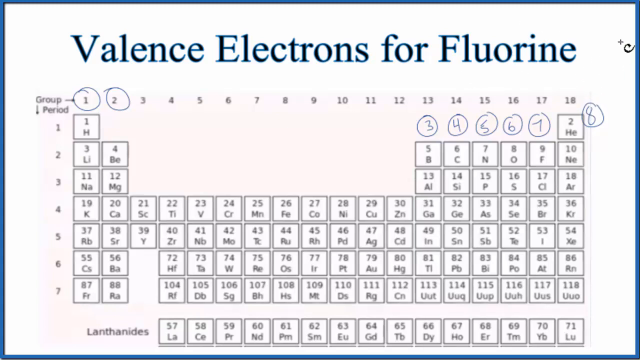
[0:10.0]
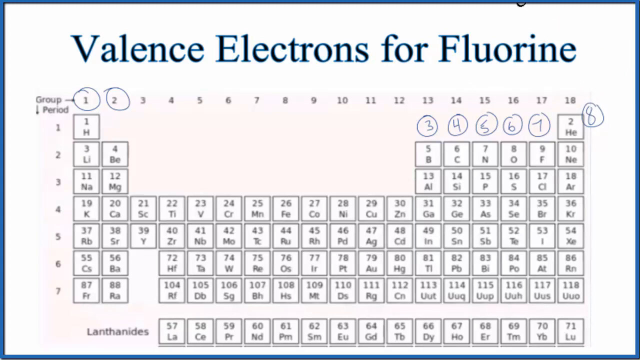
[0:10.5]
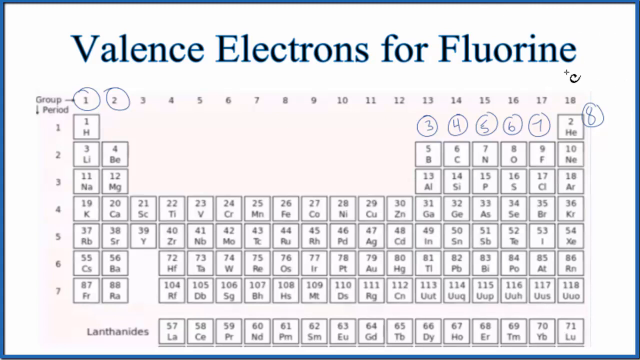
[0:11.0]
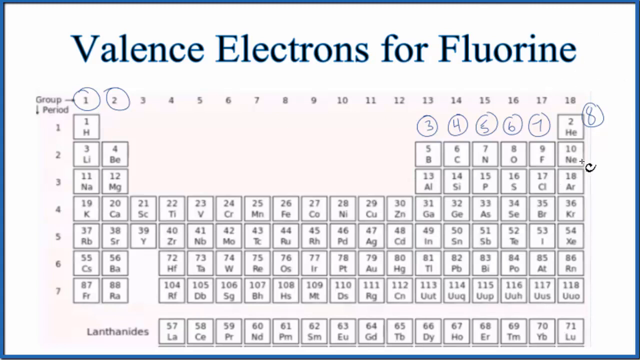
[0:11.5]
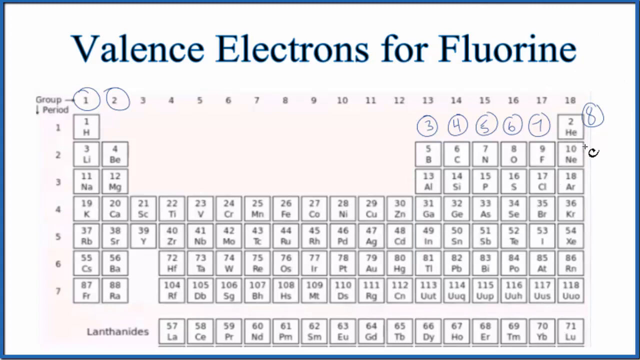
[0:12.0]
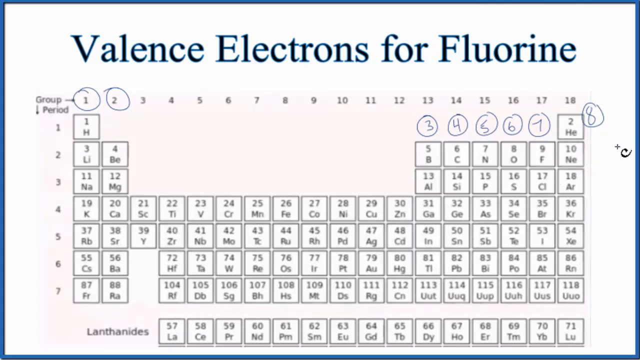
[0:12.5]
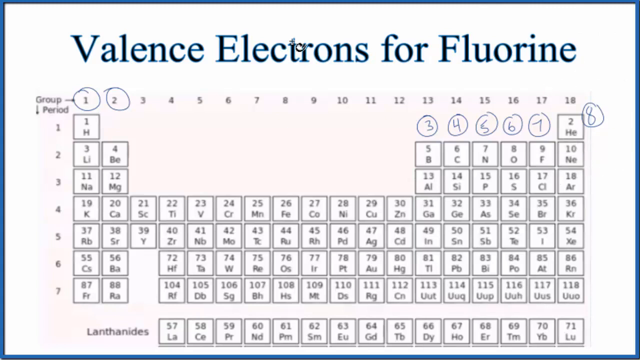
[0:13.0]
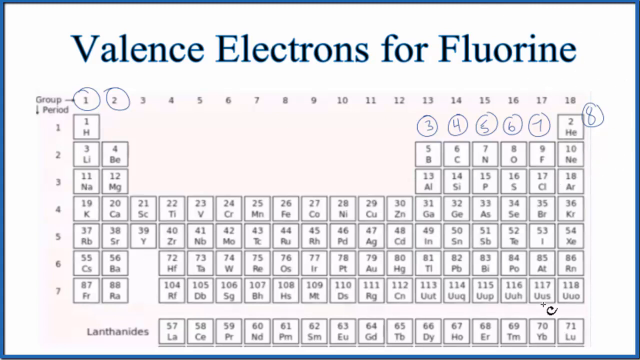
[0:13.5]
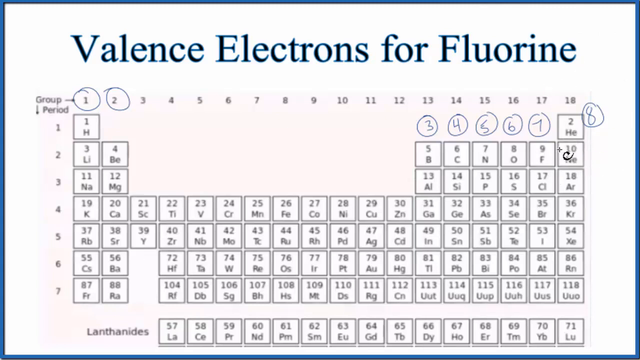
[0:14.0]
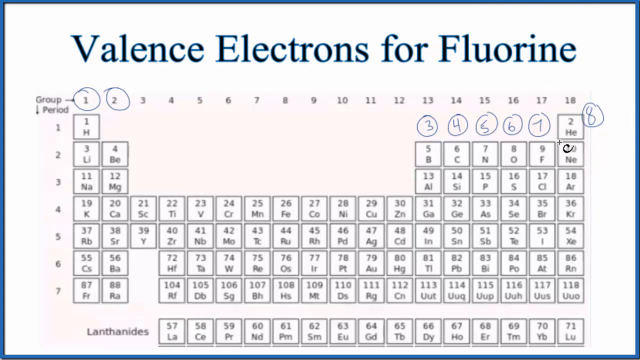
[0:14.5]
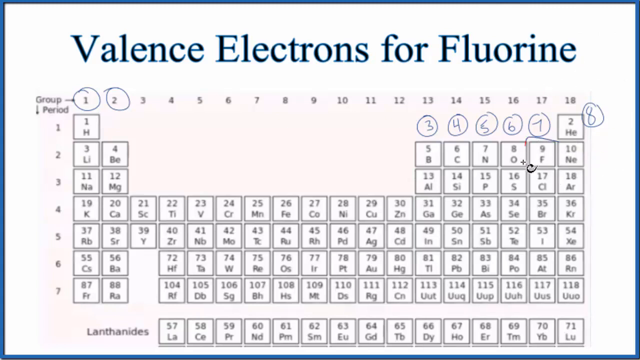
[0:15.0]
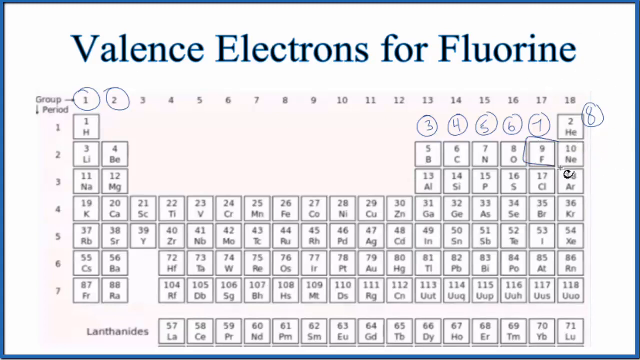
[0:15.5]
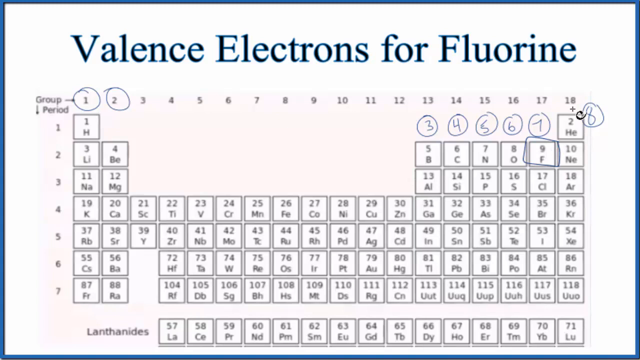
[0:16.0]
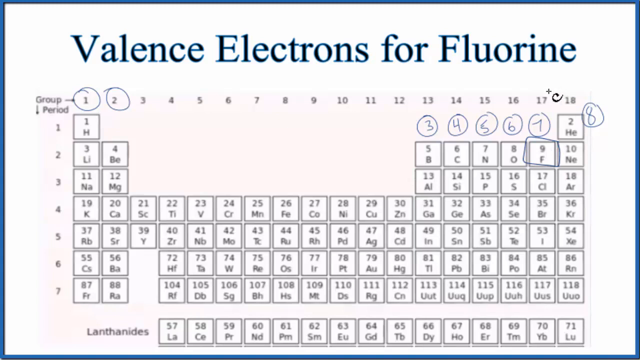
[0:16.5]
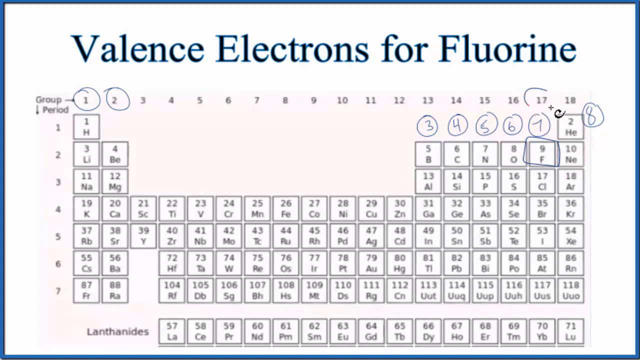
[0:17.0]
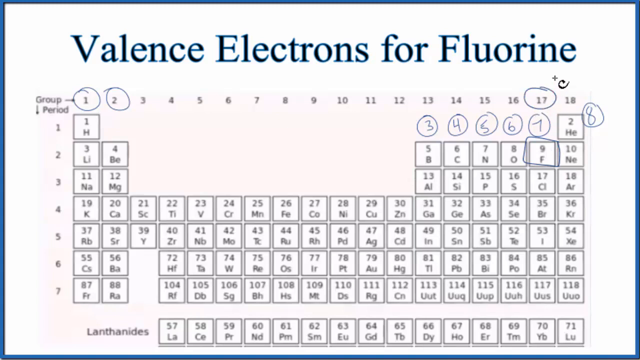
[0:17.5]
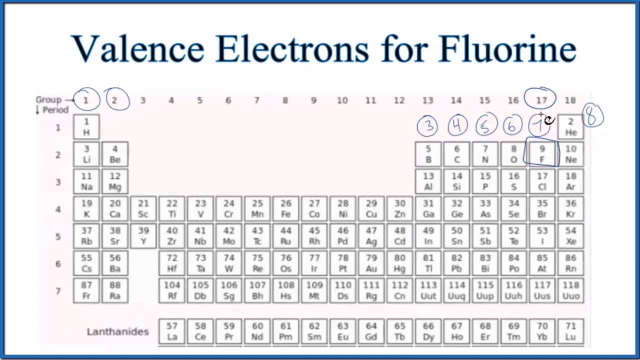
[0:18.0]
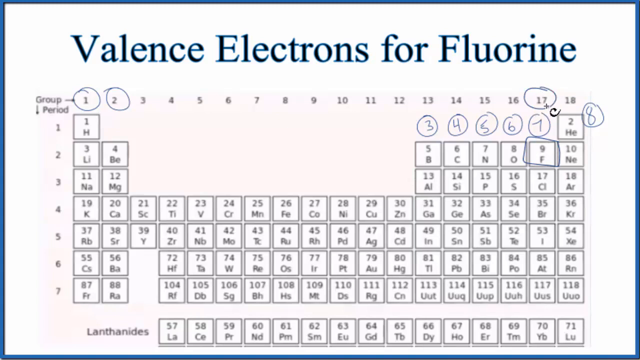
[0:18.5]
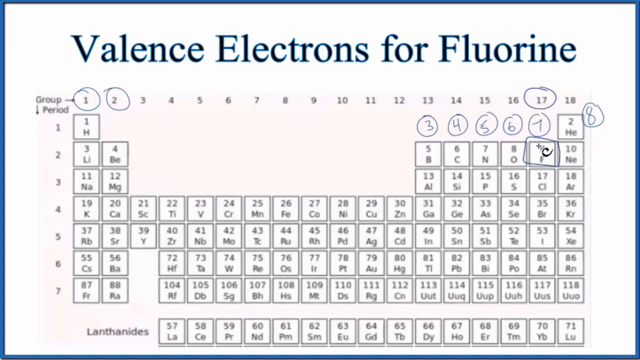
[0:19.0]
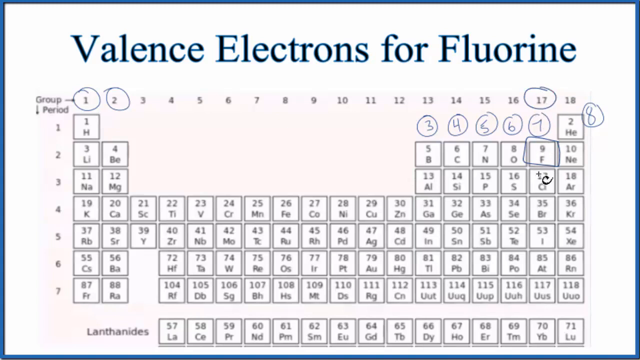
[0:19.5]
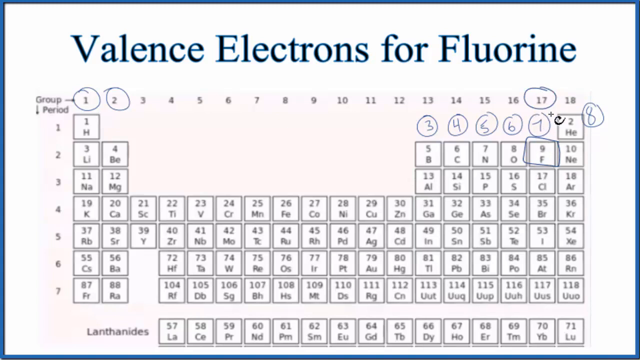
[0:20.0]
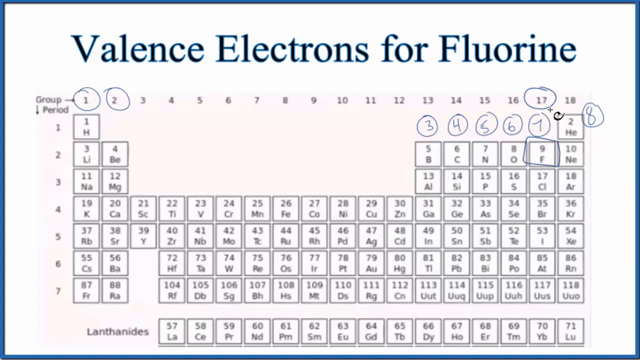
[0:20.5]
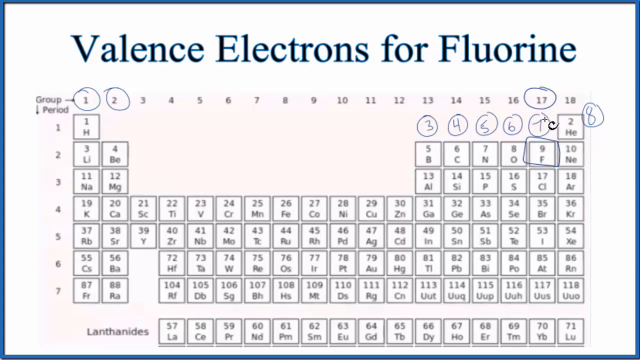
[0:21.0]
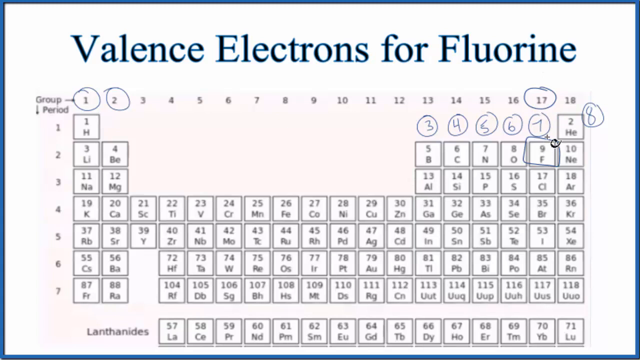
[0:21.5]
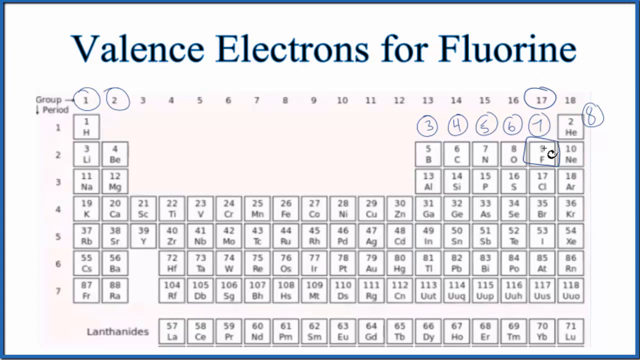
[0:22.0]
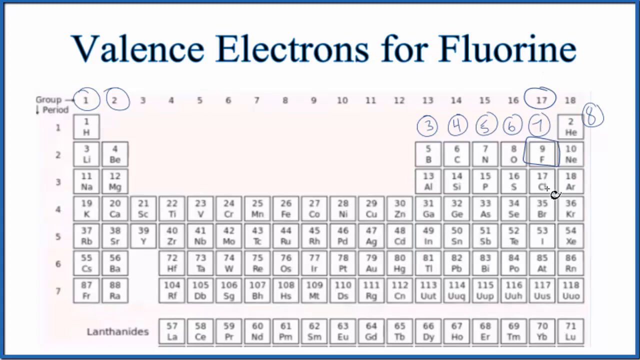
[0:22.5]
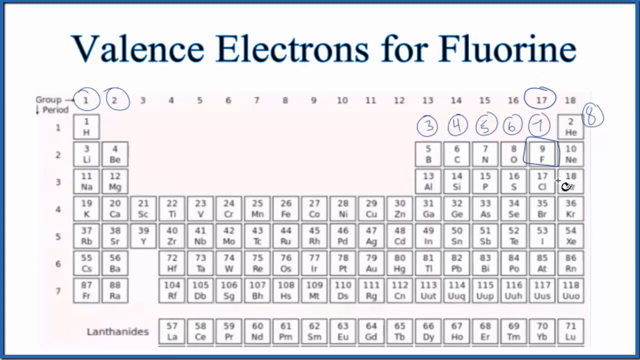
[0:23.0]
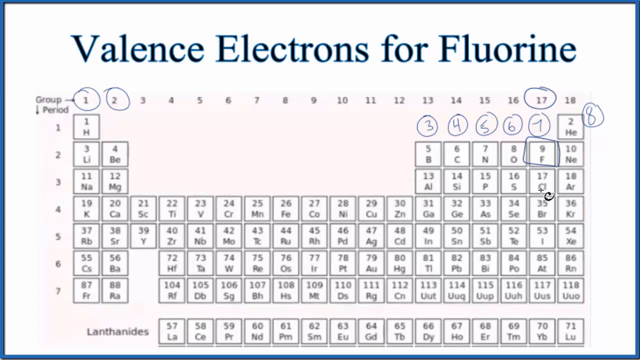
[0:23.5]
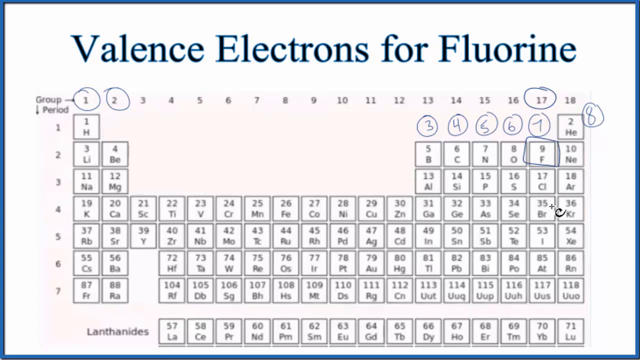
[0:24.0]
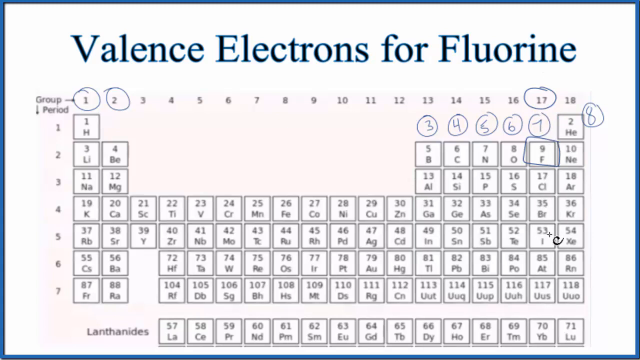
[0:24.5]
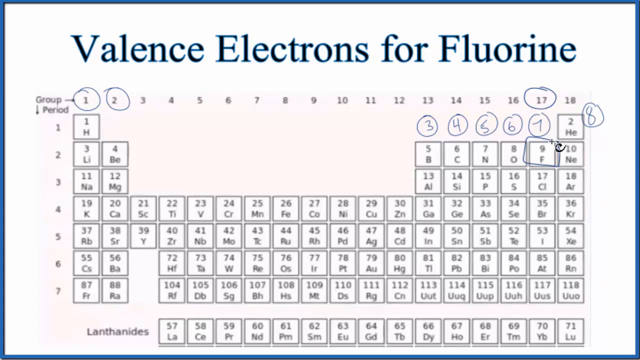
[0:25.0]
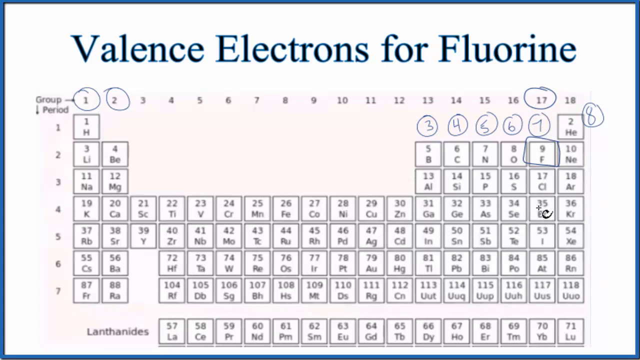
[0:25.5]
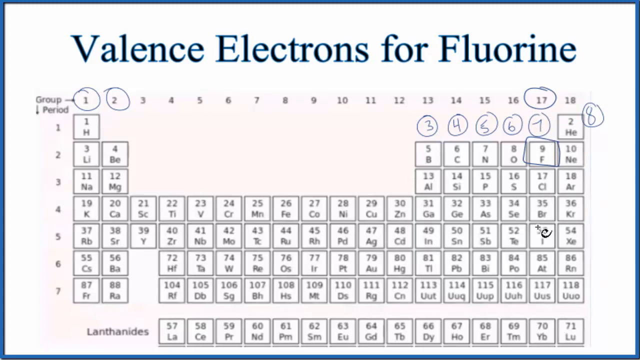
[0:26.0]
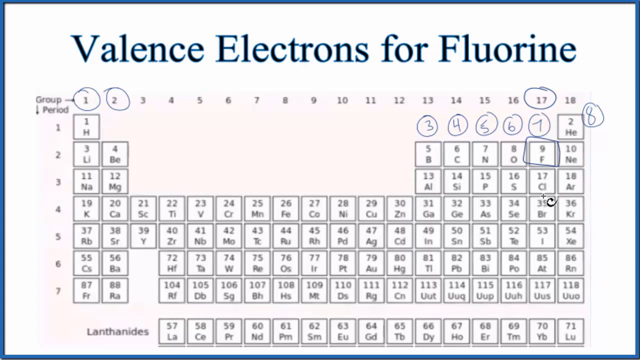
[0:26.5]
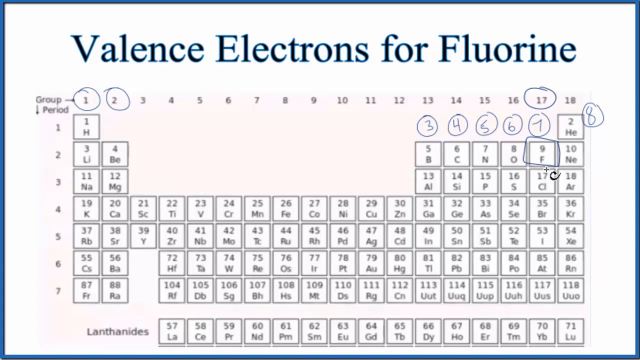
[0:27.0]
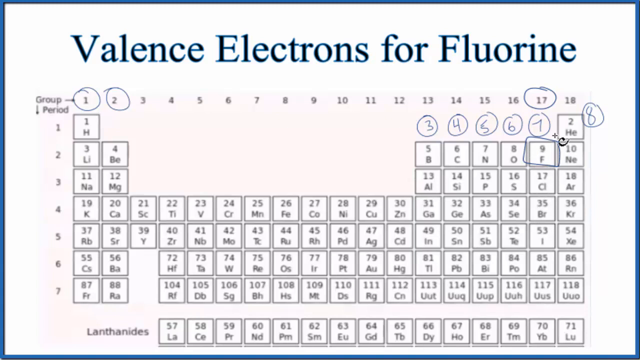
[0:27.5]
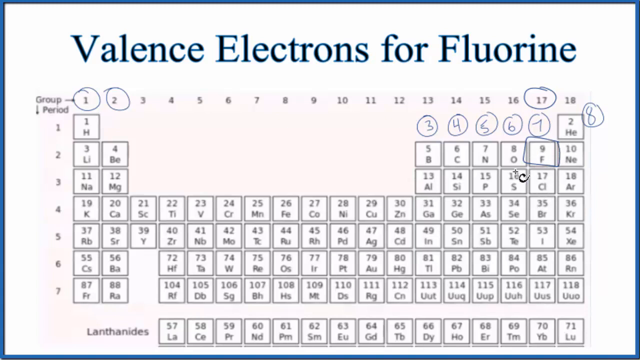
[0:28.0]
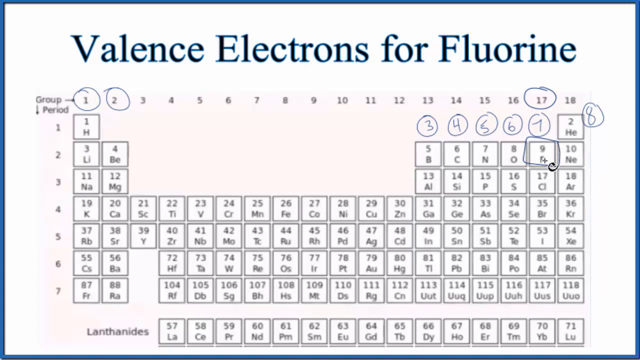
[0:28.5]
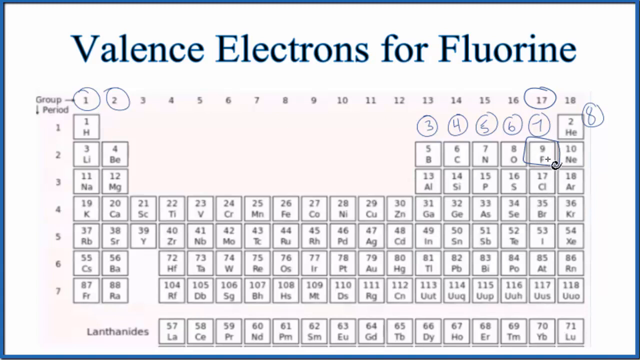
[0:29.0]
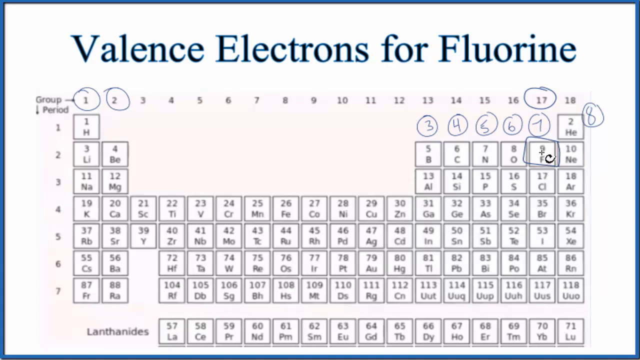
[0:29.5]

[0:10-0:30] The mouse cursor moves in a circle at the top right, then moves lower on the screen, about 12% of the screen down. The person begins circling elements with the mouse, starting with element number 10 on the periodic table, then moving to element number 9. From element 9, the cursor rotates over the handwritten number 7 written above. It then goes down the table, circling elements, reaches element number 35, and returns to element 9, seemingly circling it again. The handwritten numbers above some of the elements possibly indicate valence.